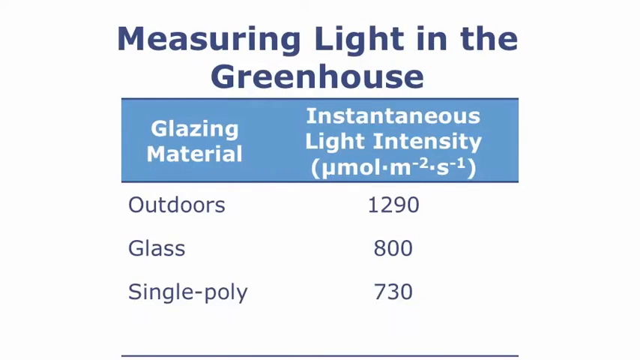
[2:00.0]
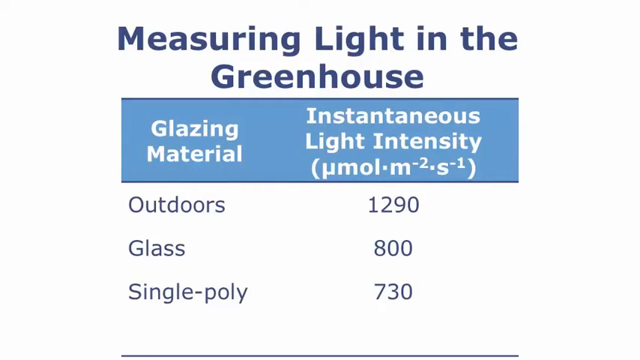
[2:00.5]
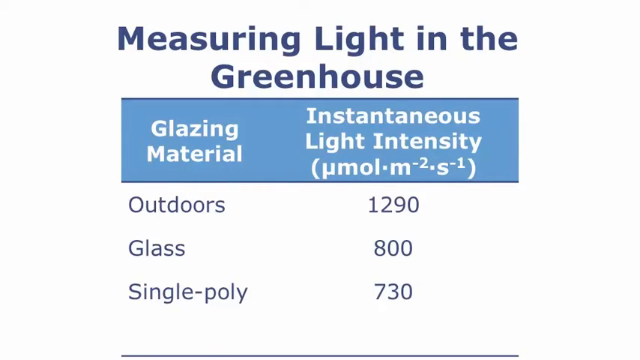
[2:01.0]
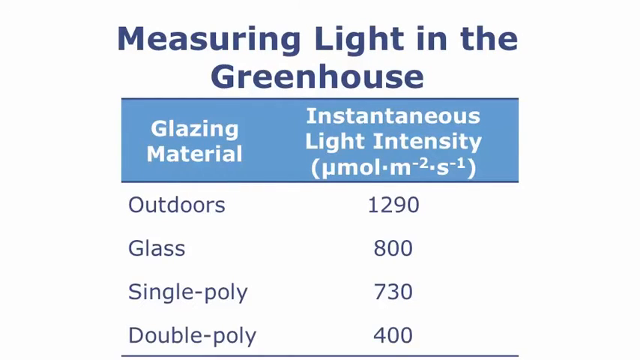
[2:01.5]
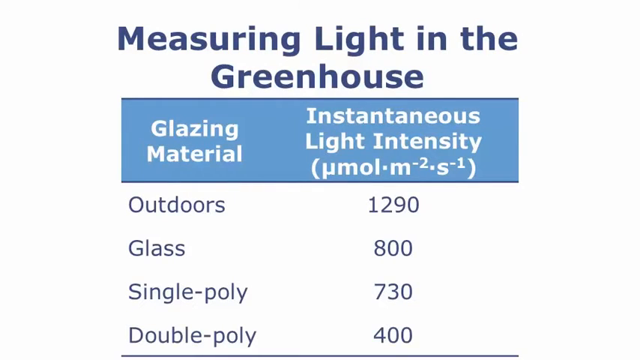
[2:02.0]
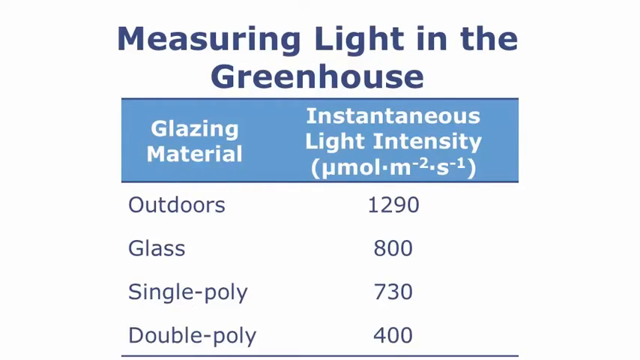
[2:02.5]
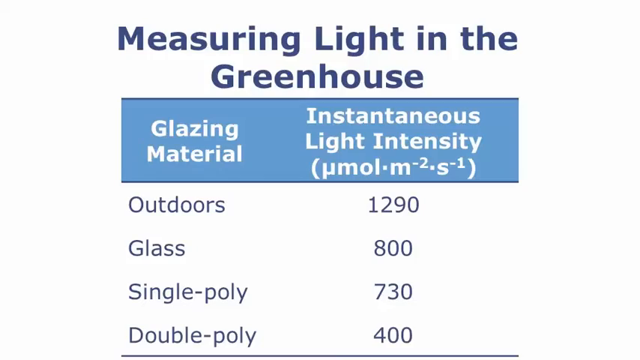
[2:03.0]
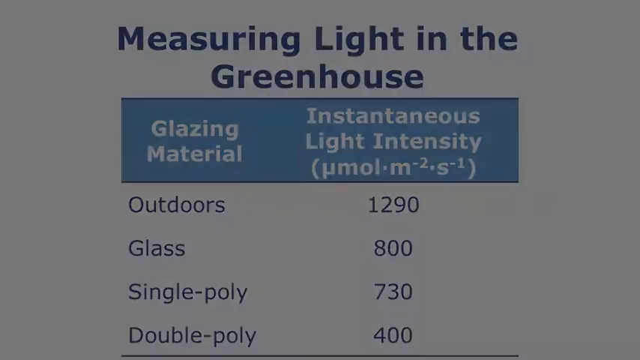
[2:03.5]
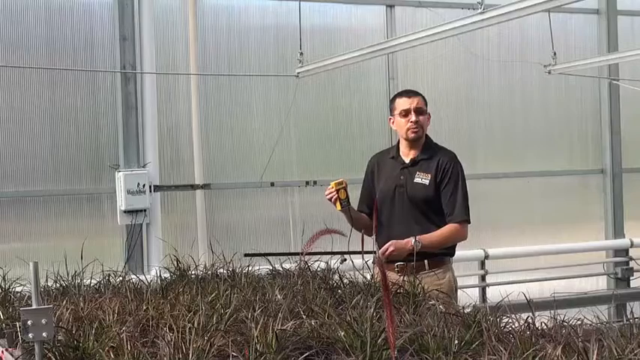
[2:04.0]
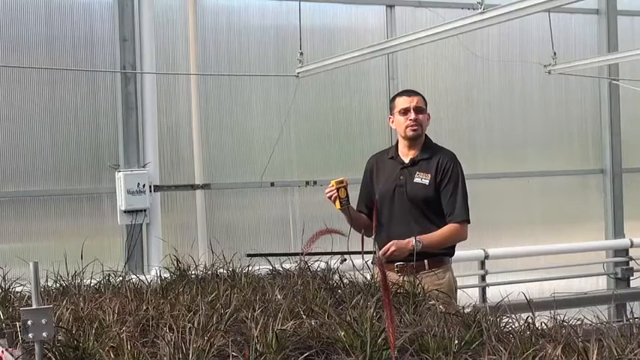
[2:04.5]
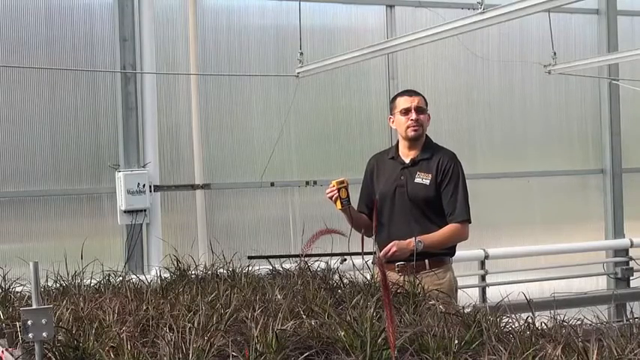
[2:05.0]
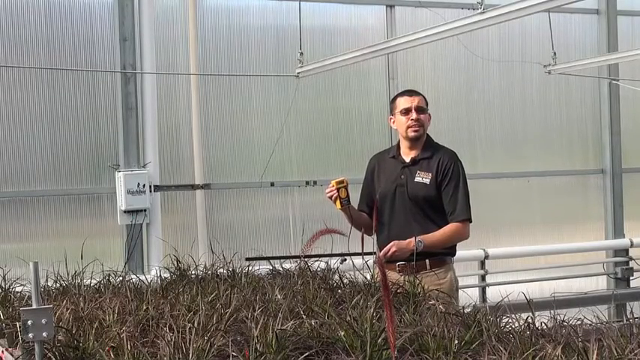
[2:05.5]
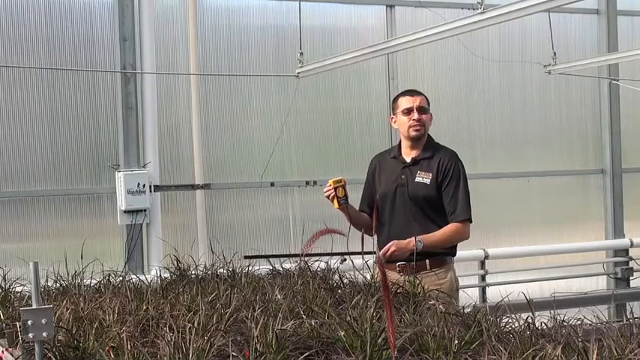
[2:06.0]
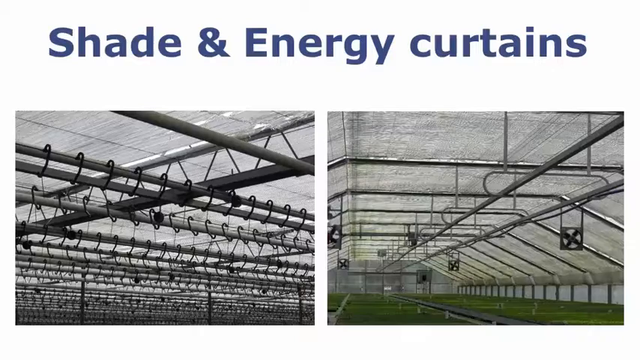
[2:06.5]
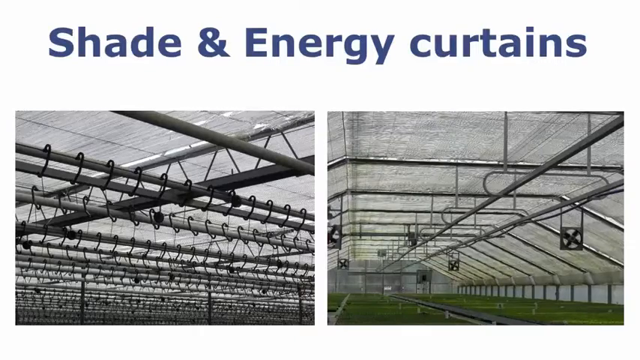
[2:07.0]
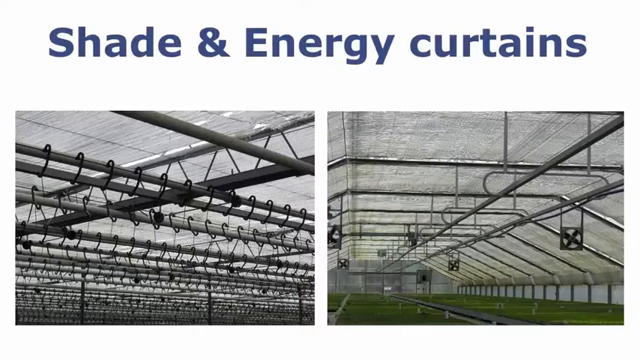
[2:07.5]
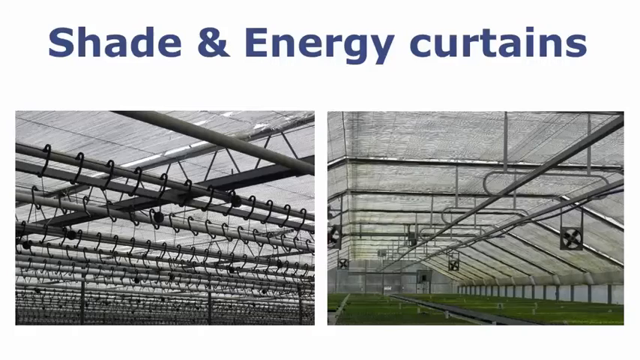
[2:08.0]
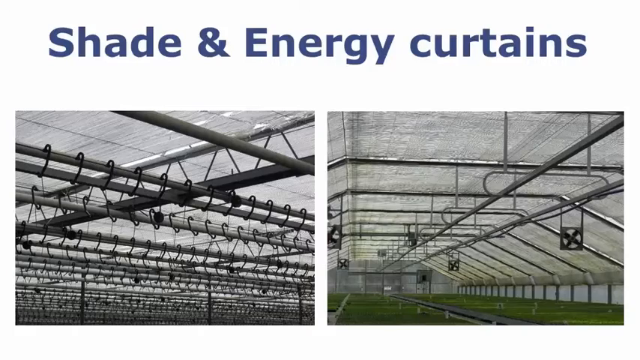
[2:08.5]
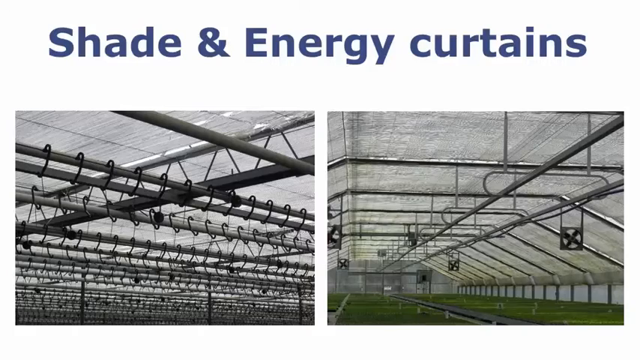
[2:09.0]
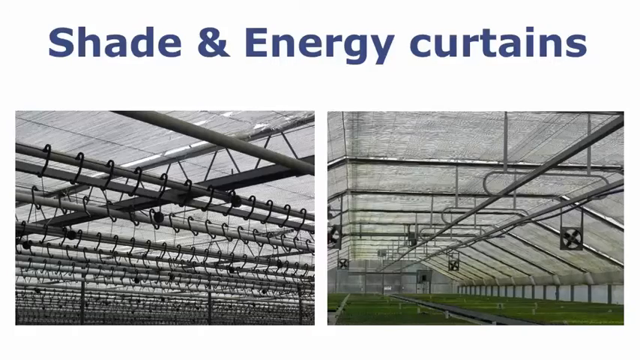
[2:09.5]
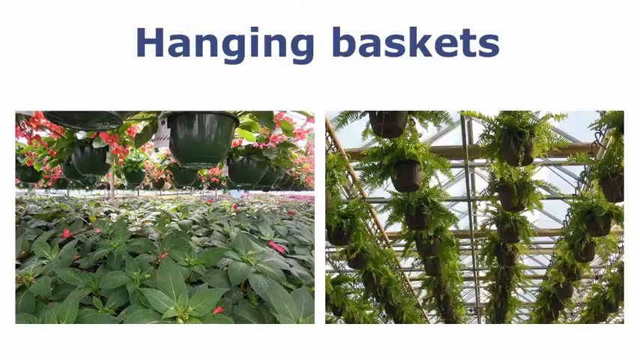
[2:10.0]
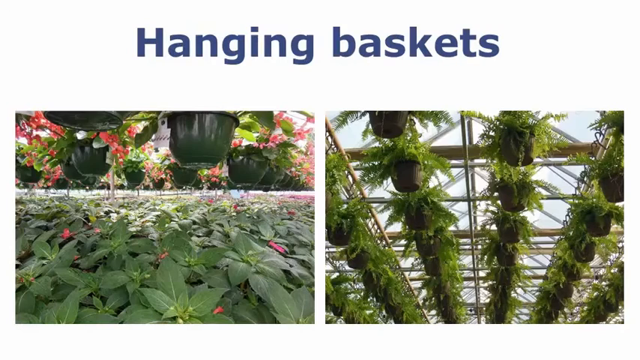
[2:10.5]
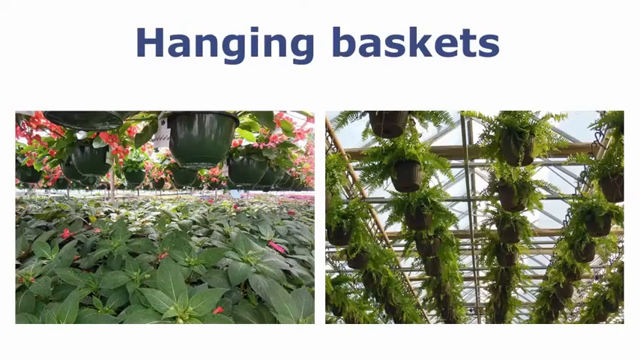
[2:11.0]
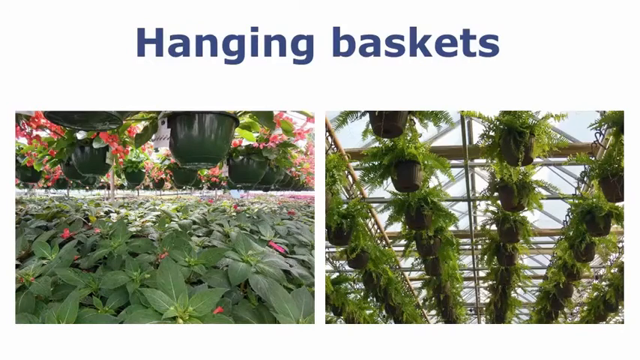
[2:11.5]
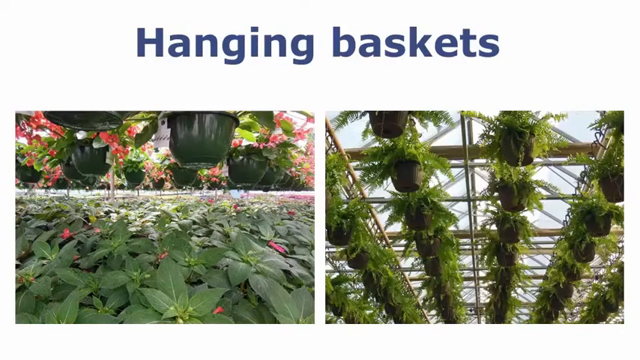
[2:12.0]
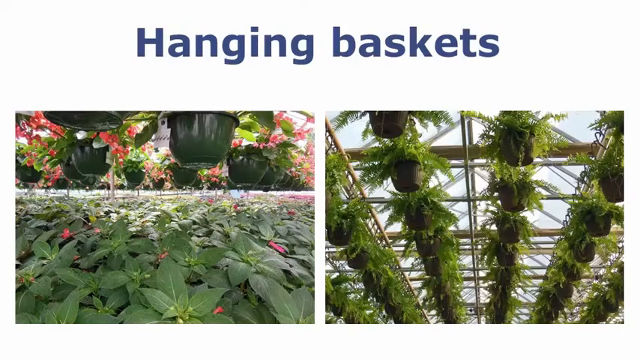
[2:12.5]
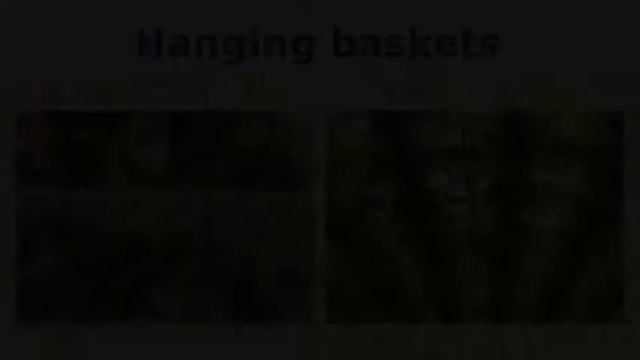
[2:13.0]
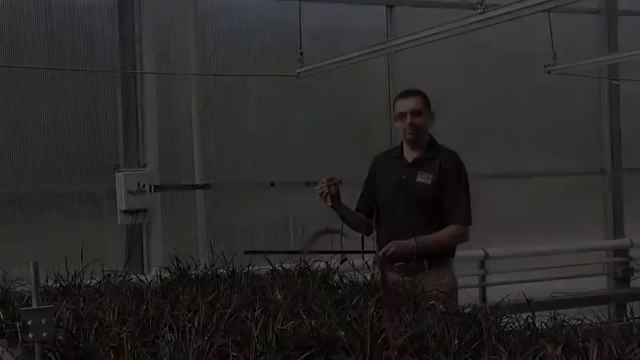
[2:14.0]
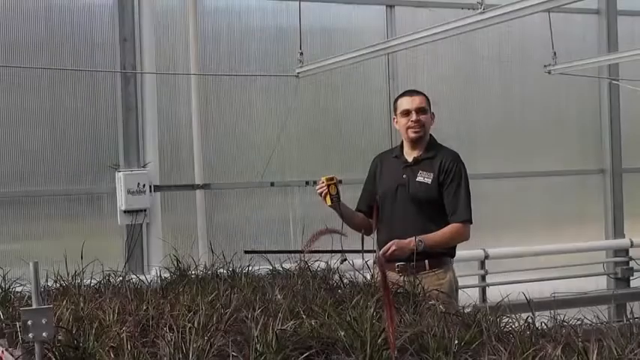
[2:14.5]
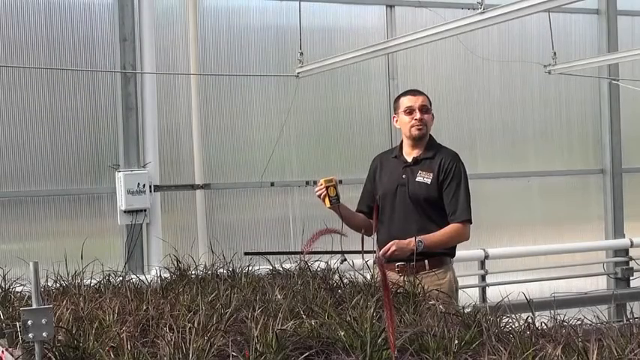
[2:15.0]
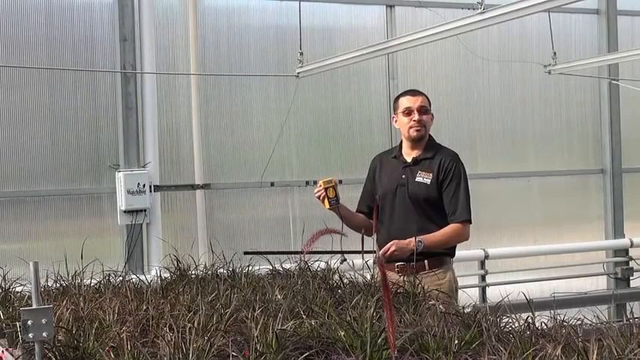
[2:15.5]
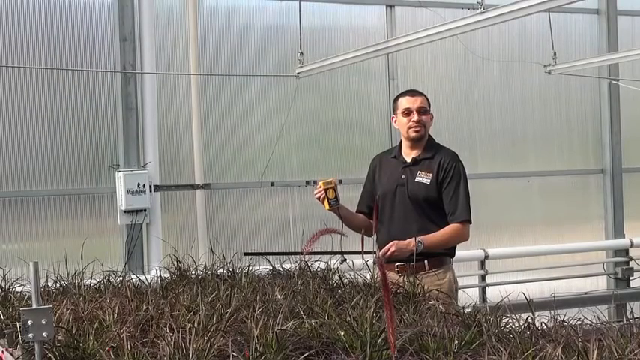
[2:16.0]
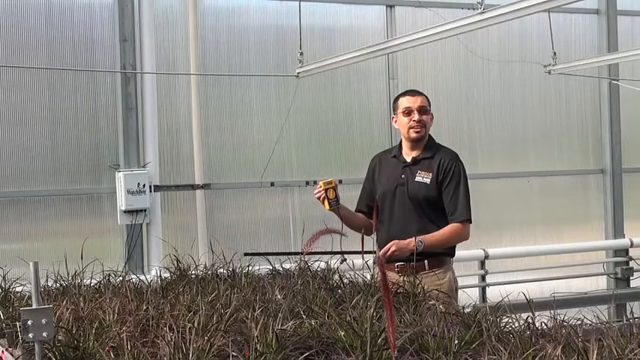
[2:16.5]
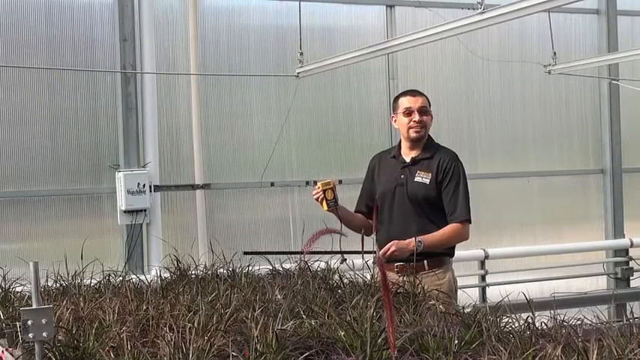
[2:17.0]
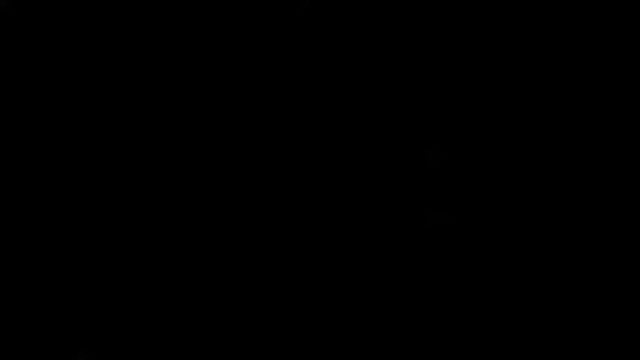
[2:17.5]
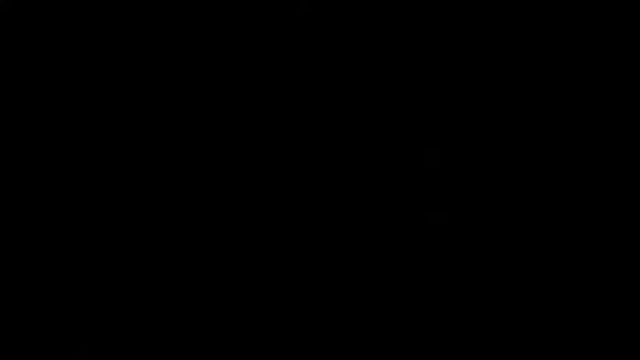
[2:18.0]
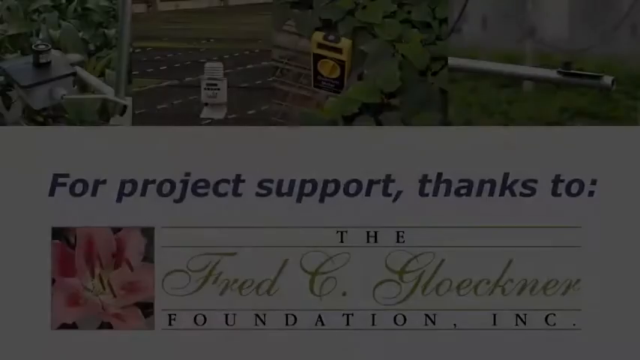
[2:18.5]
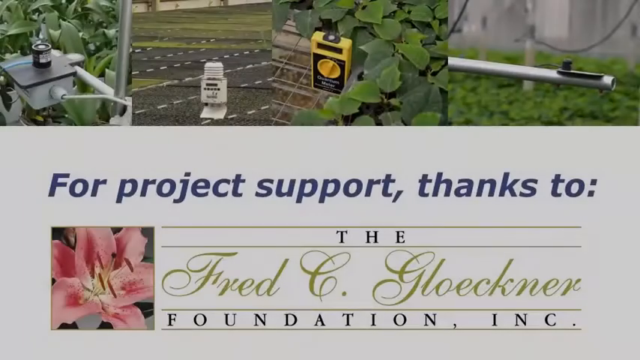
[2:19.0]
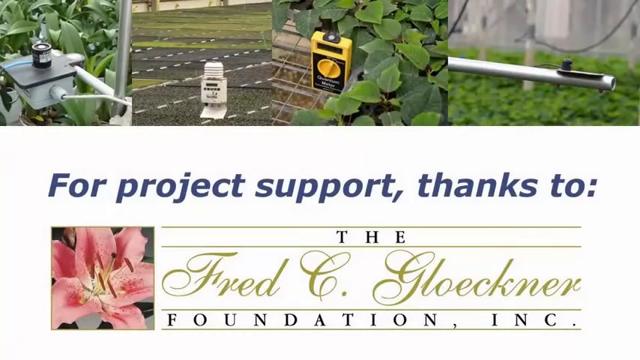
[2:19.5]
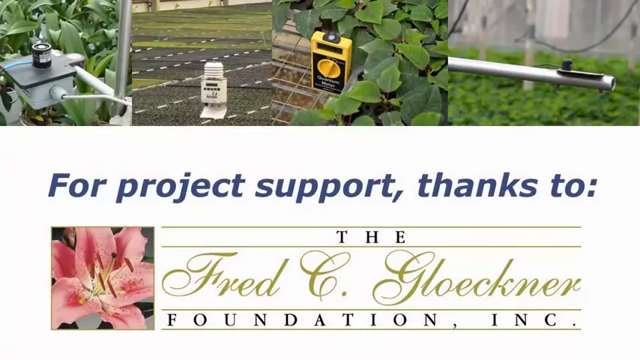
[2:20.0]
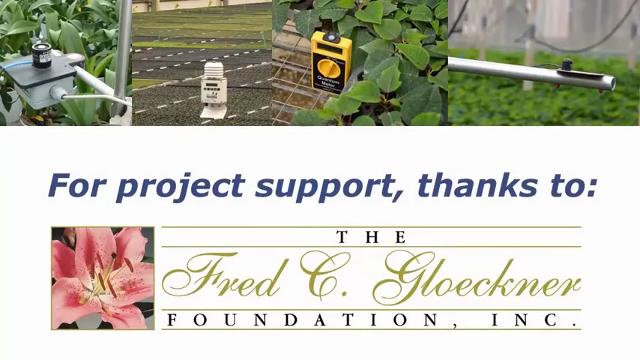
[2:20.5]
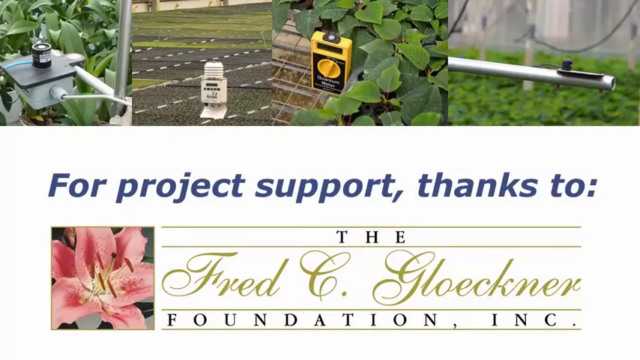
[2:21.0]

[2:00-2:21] A slide with a white background has blue lettering up top reading "Measuring Light in the Greenhouse." A blue box underneath reads, in white lettering from left to right, "Glazing Material" and "Instantaneous Light Intensity," with an unreadable mathematical equation in a closed bracket. Underneath, blue lettering reads "Outdoors 1290," "Glass 800," "Single-Poly 730," and below that "Double-Poly 400." Next, a white man with short brown hair, brown sunglasses and a brown goatee is on the right. He holds a yellow box electrical device in his right hand, wears a silver wristwatch on his right hand, and holds a black stick in his left hand. He wears a brown belt with a gray buckle and cream-colored pants. In front of him is gray and green tall grass, behind him gray sheet panels run across, and a gray pole on the left side has a white electrical box. He talks to the camera. The next slide has a white section up top with gray and bluish letters reading "Shade and Energy Curtains" and two pictures at the bottom: on the left, gray poles with black rounded rings and a gray roof; on the right, gray poles running downwards, a gray roof and green vegetation at the bottom. The final slide is white at the top with blue lettering reading "hanging baskets." On the right side are gray hanging baskets with green branches hanging out of them; on the left side are more green pots with red and green leaves hanging out and a lot of green leaves just below.